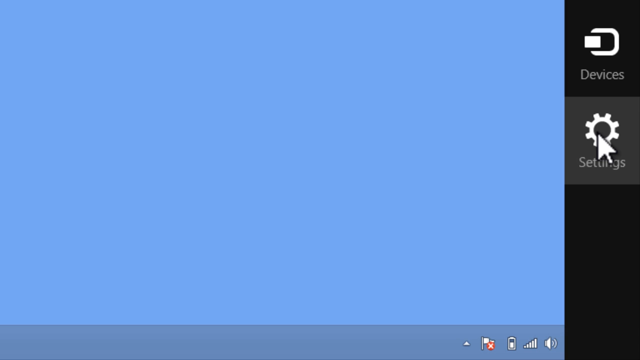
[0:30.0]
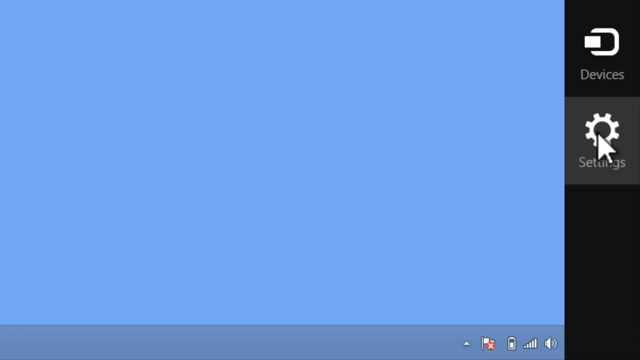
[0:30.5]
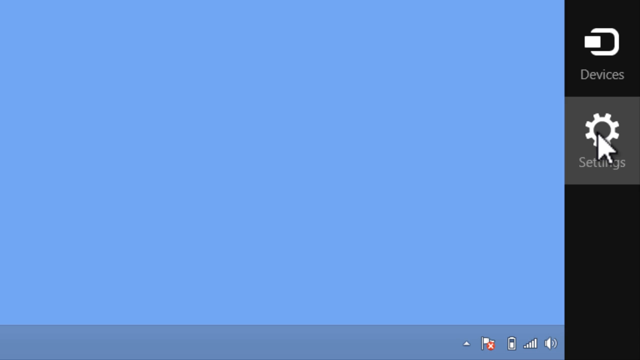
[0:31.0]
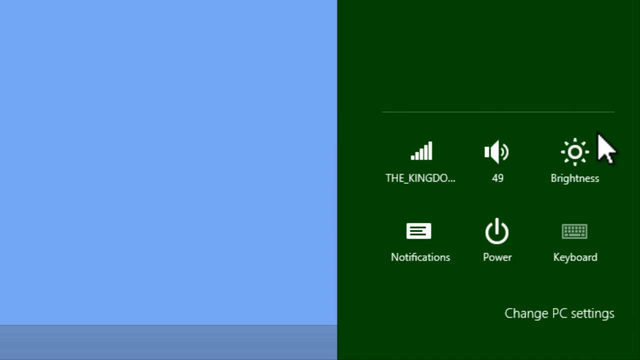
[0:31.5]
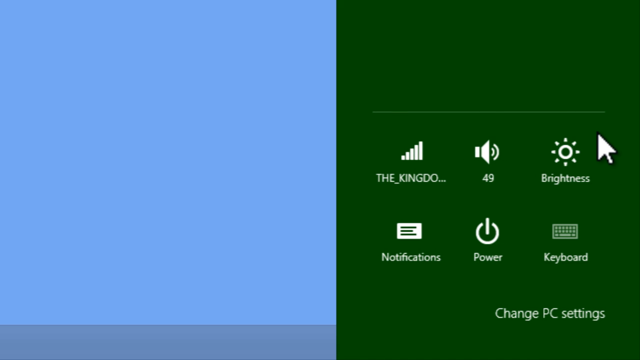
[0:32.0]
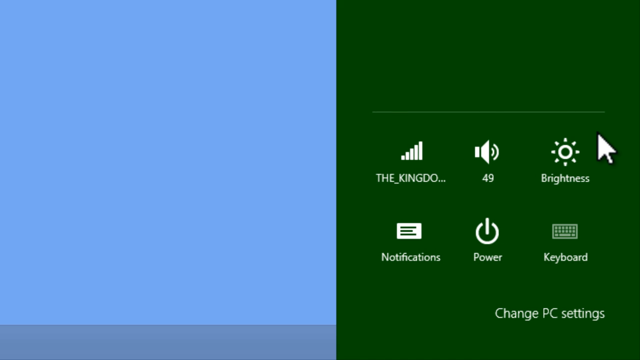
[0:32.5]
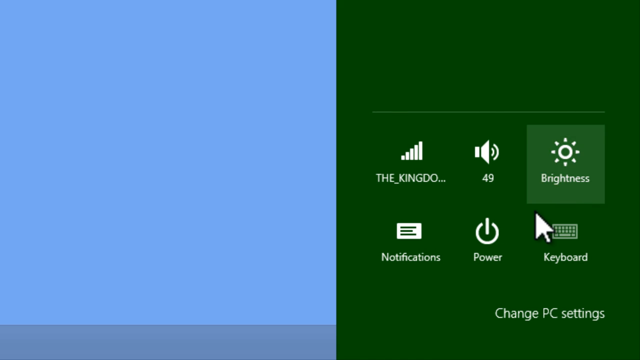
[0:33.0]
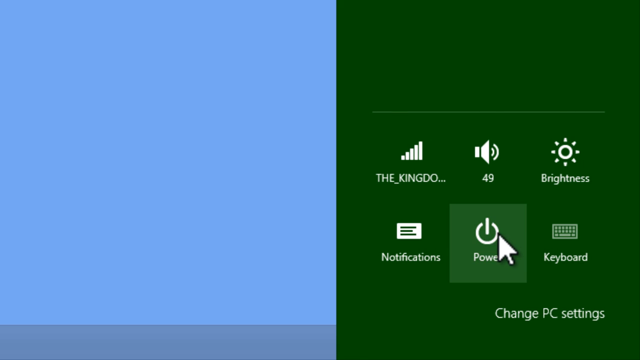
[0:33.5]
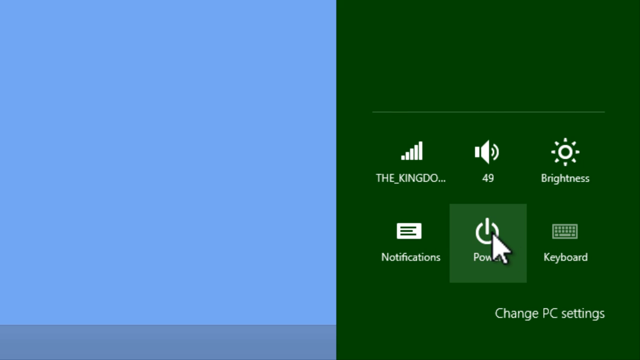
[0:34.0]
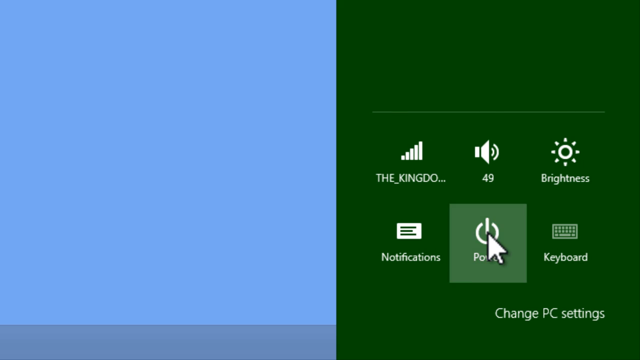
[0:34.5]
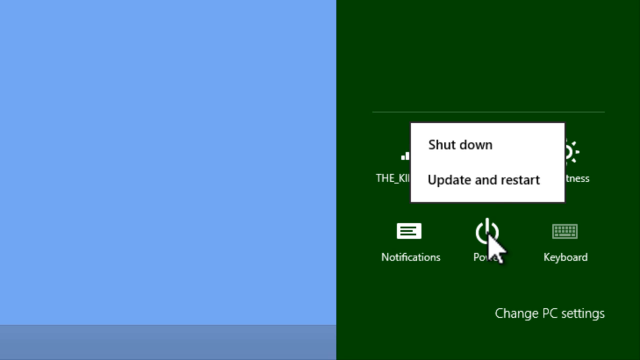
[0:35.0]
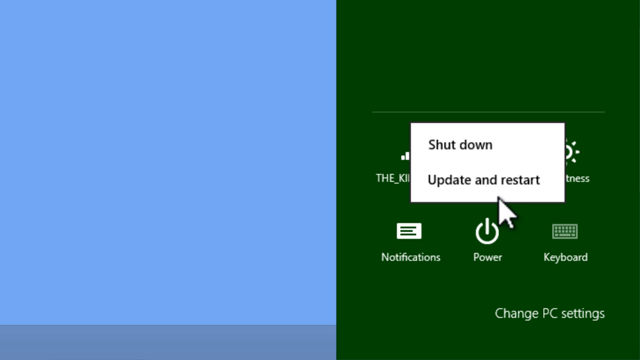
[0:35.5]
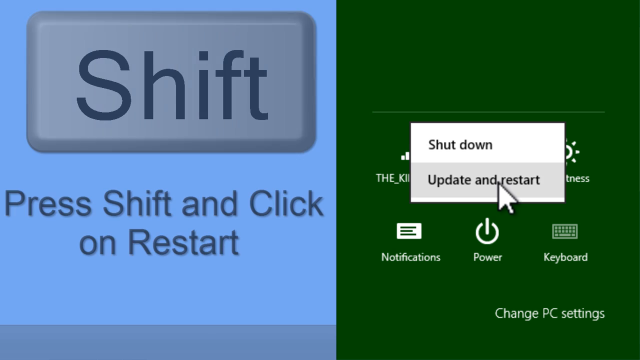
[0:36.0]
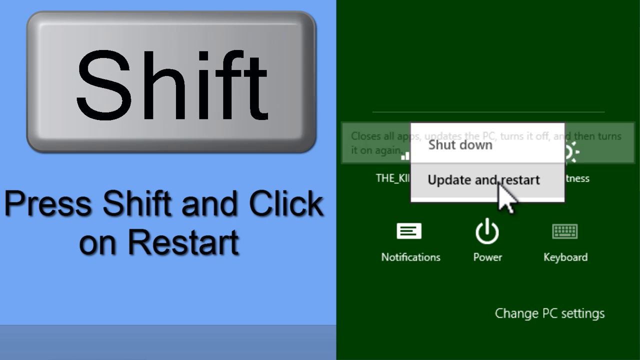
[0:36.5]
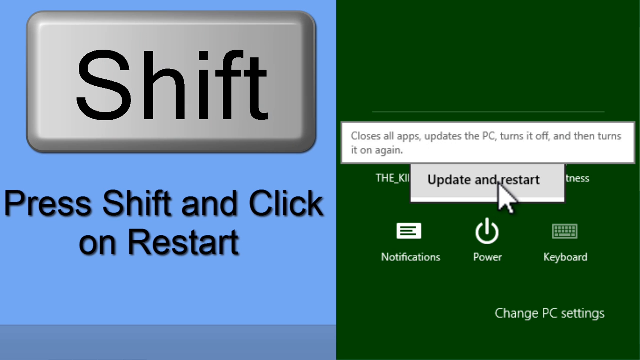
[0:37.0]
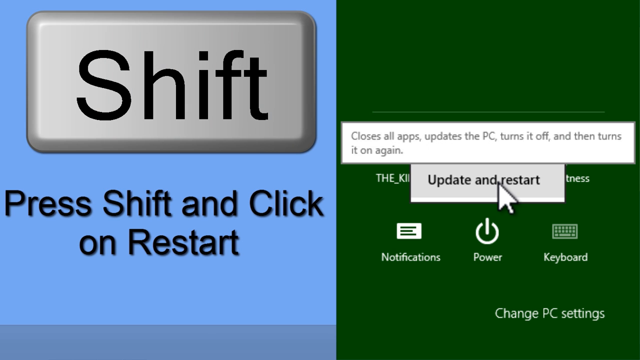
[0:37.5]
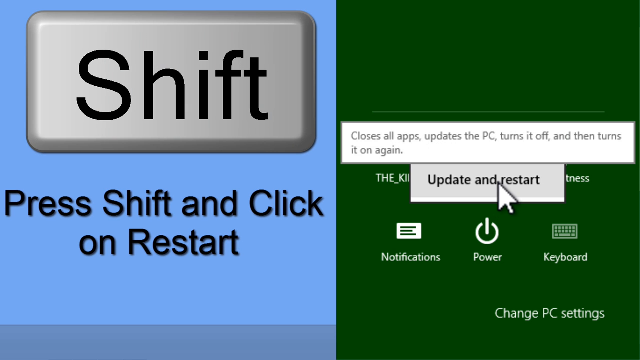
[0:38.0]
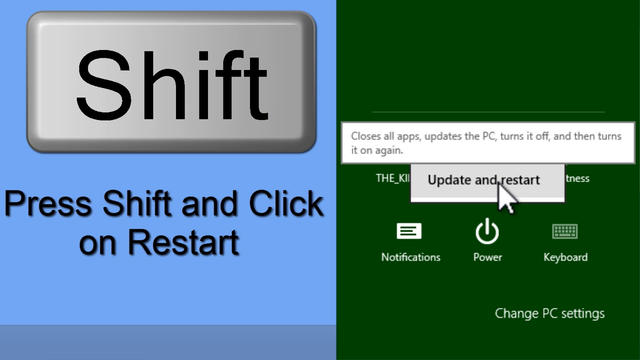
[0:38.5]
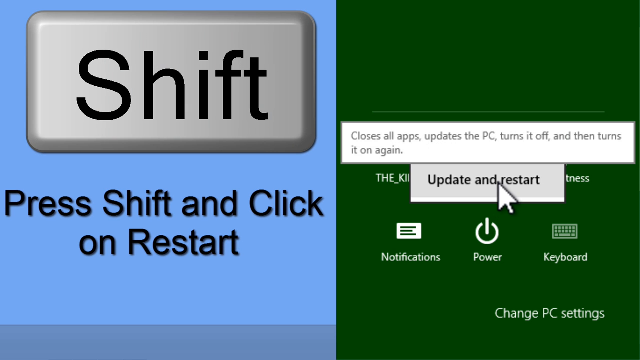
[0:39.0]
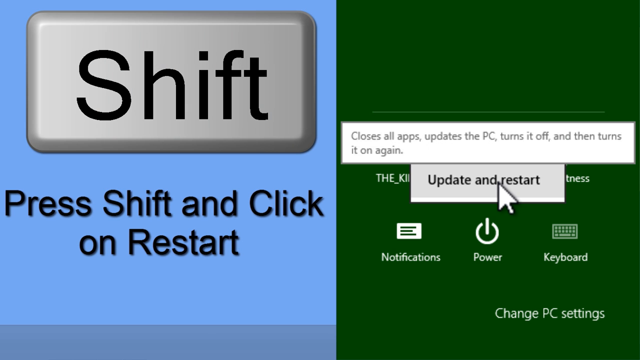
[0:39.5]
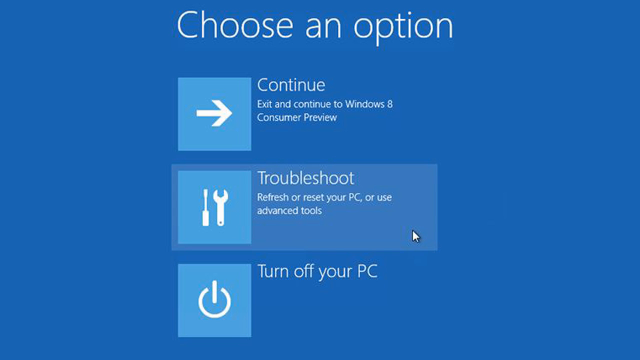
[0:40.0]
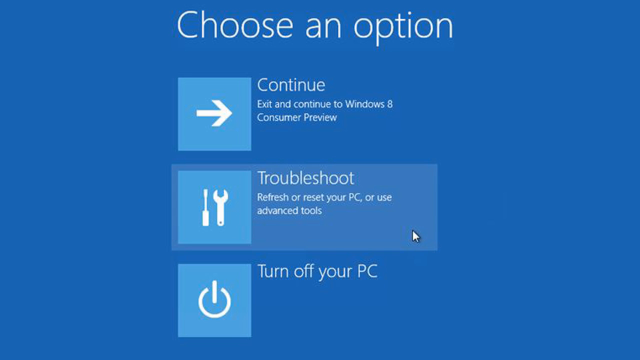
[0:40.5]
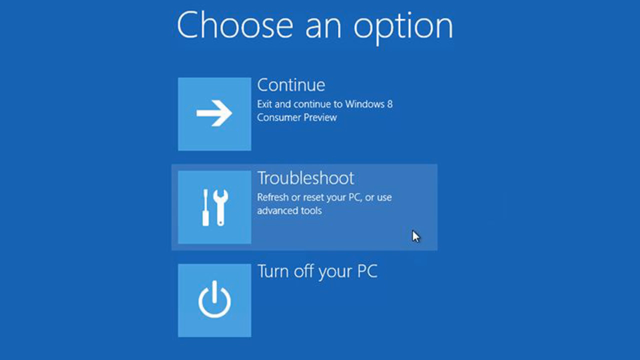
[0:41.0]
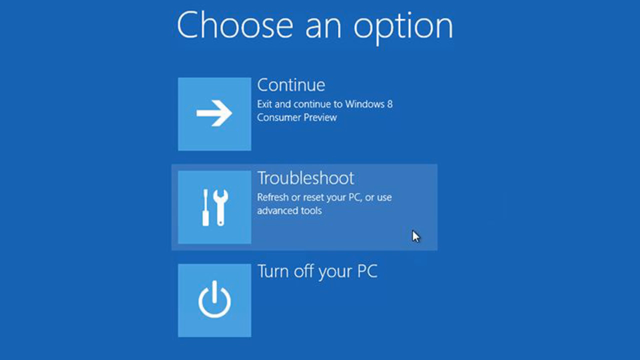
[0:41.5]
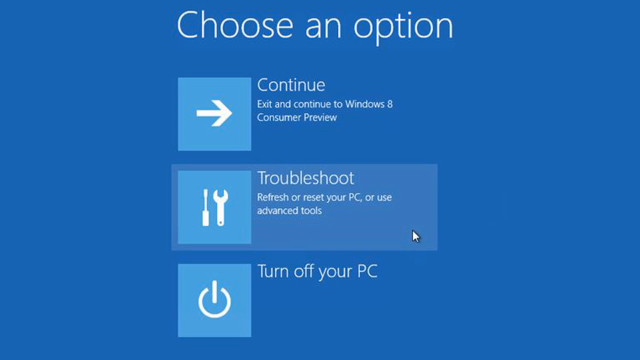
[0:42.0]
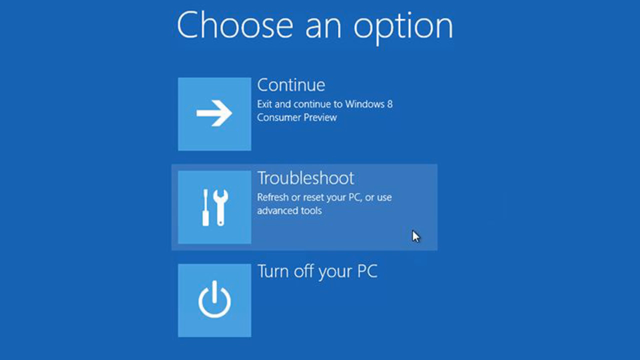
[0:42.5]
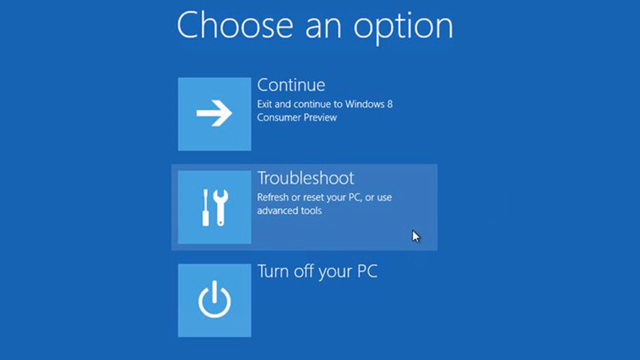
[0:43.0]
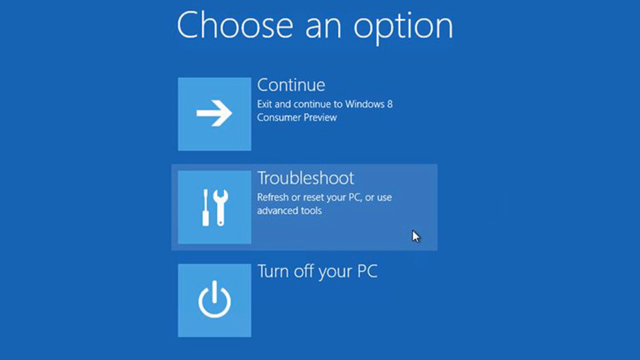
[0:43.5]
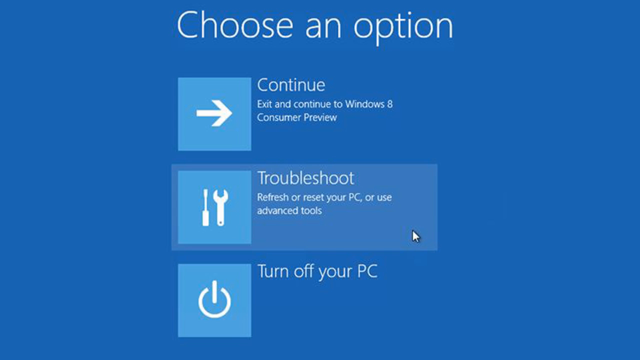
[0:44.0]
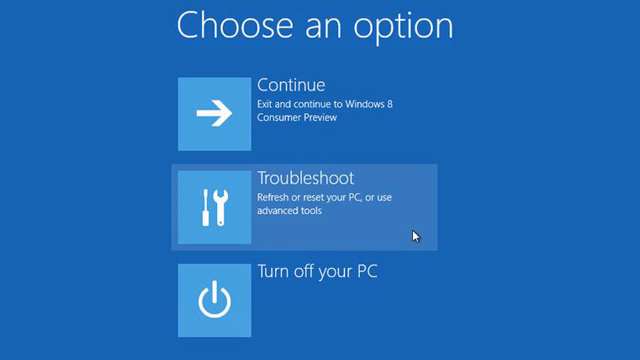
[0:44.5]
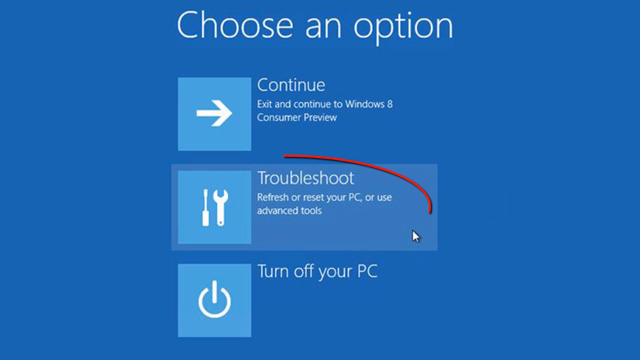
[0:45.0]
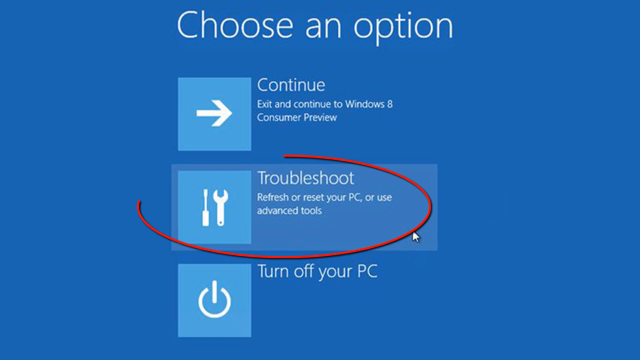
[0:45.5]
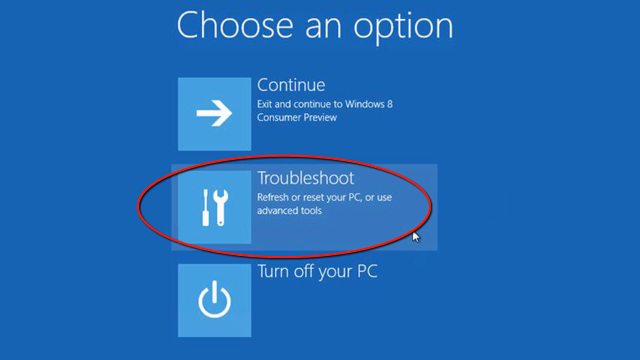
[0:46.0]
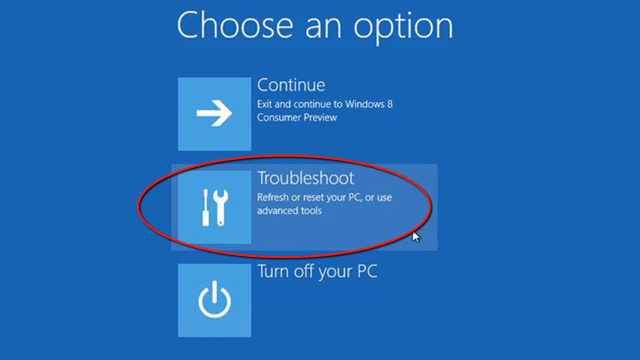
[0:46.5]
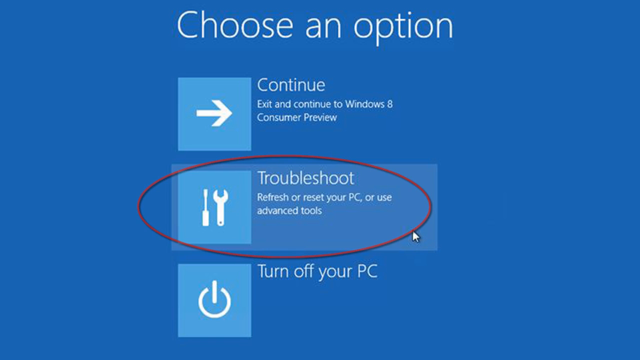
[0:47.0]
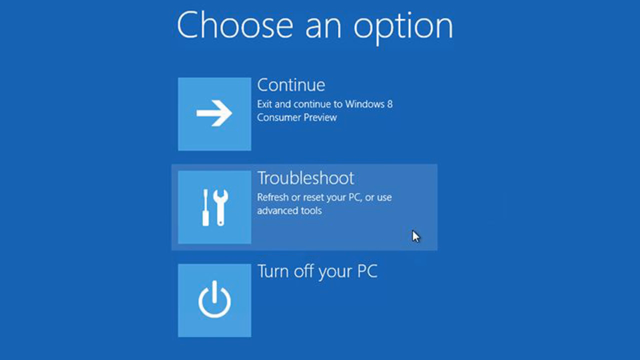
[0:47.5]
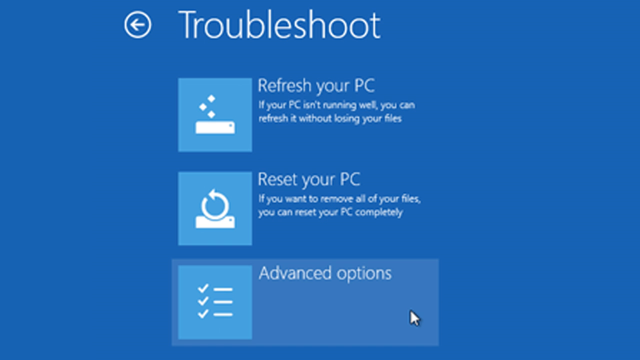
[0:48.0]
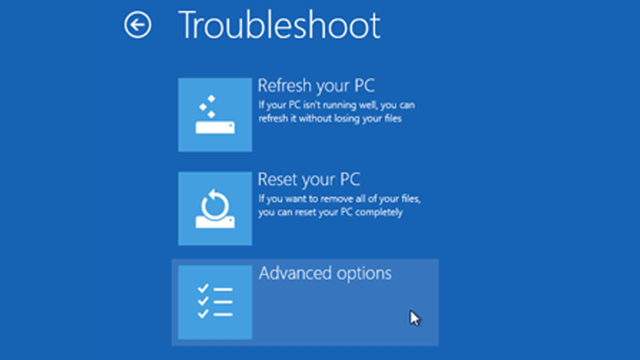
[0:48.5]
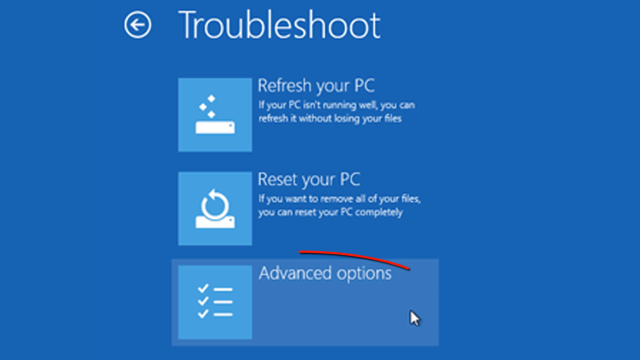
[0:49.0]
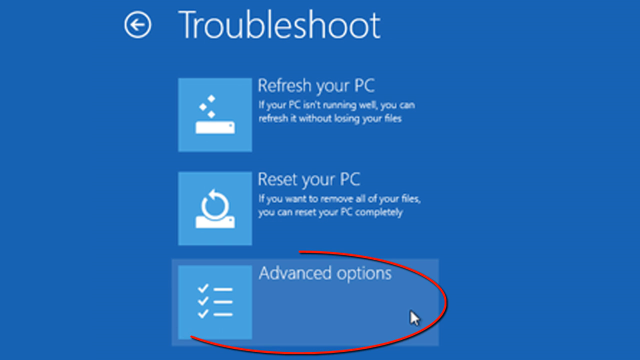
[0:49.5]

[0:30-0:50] A different page appears, showing an enlarged version of the shift key. The troubleshoot option appears, and the mouse hovers over the update and restart icon. Various options are shown, such as settings, keyboard and brightness, and the screen says "press shift and click." The troubleshoot page is shown, leading on to advanced options.